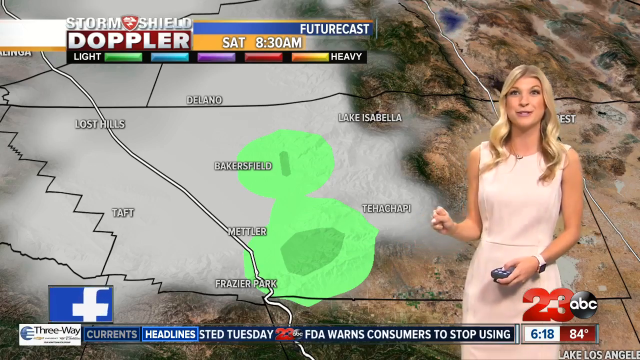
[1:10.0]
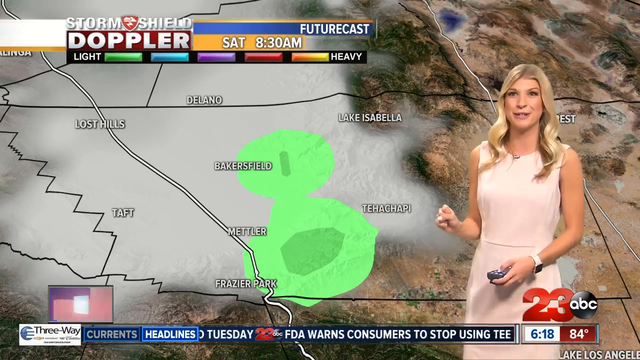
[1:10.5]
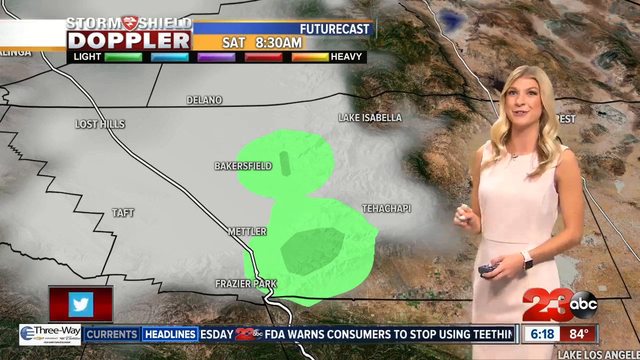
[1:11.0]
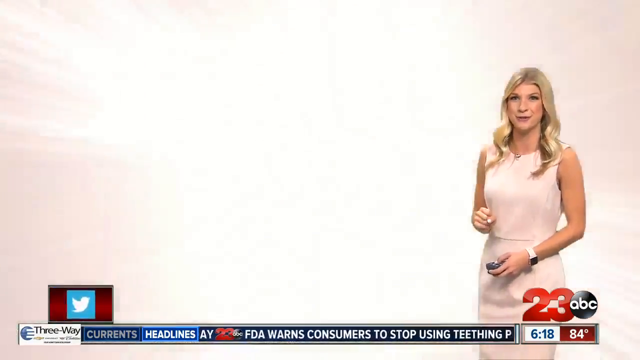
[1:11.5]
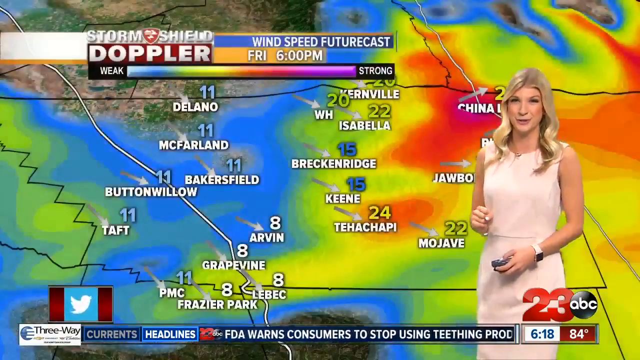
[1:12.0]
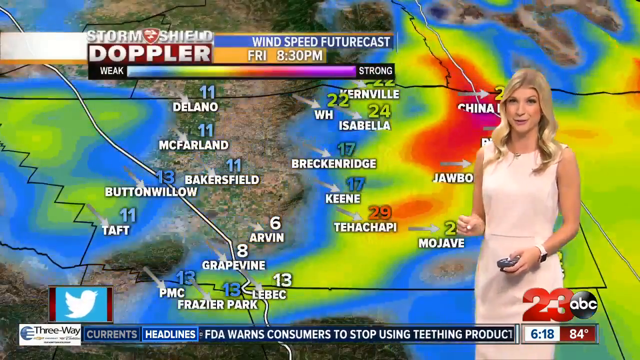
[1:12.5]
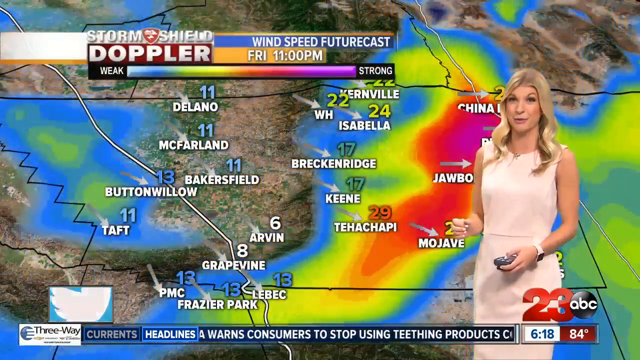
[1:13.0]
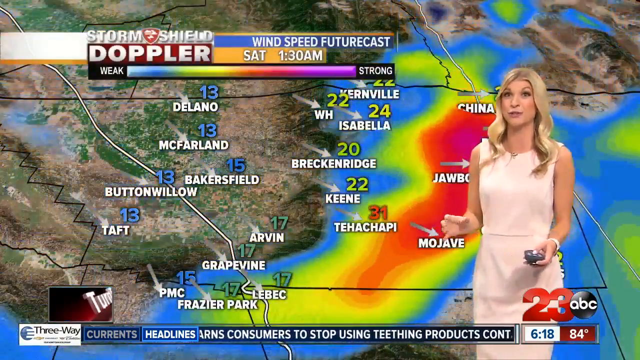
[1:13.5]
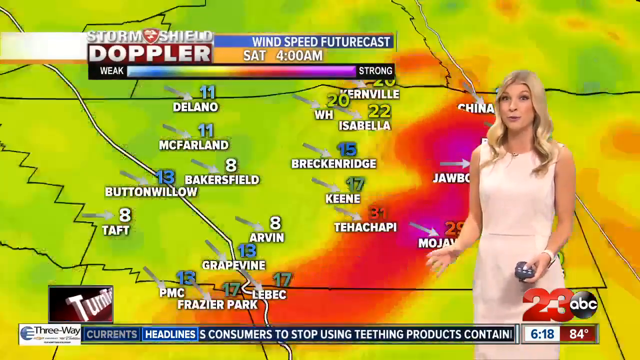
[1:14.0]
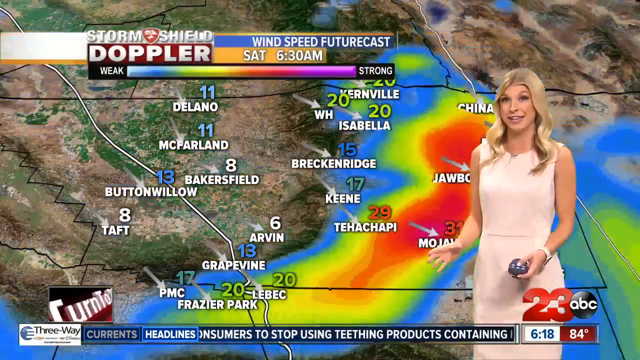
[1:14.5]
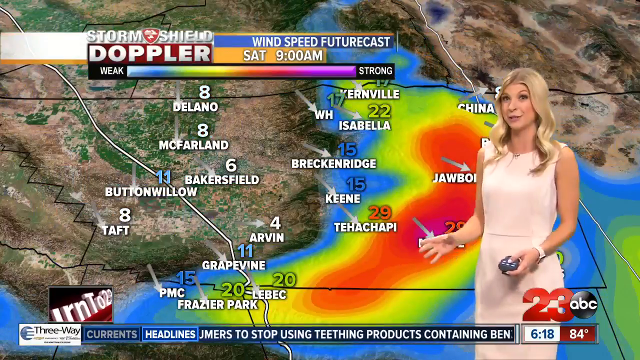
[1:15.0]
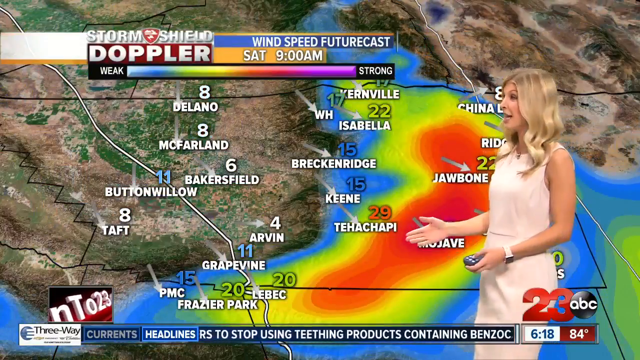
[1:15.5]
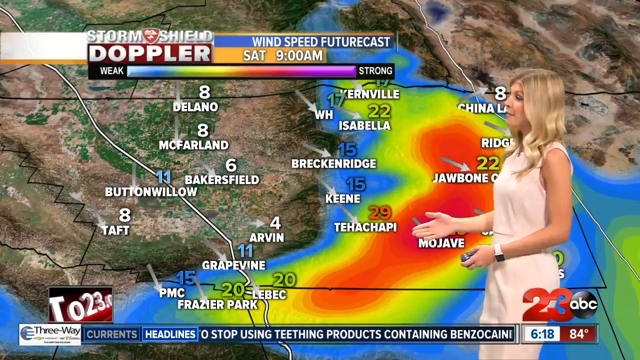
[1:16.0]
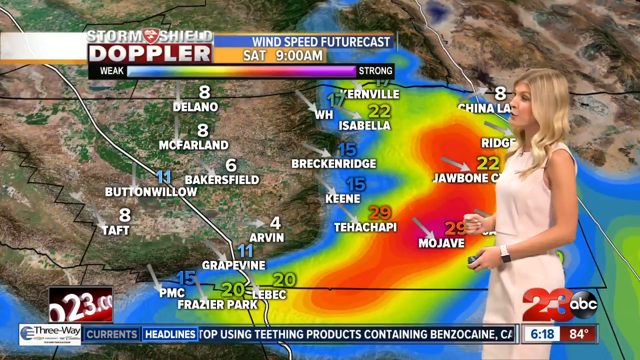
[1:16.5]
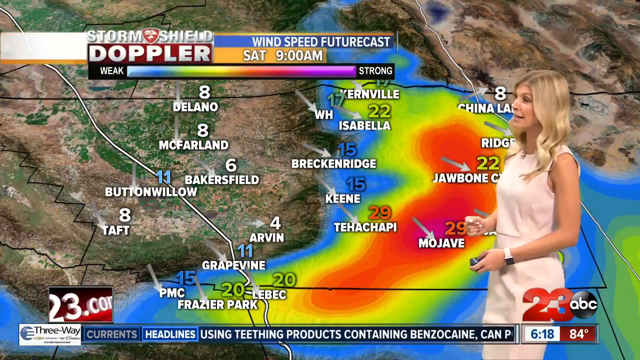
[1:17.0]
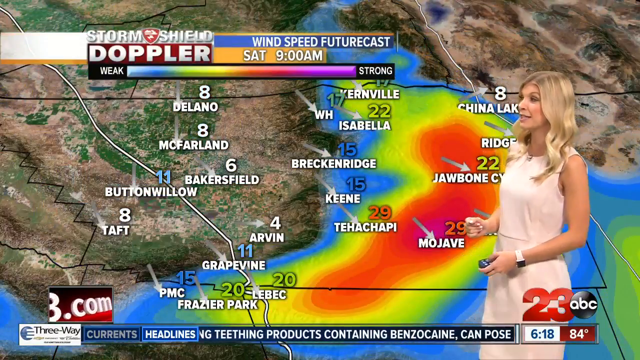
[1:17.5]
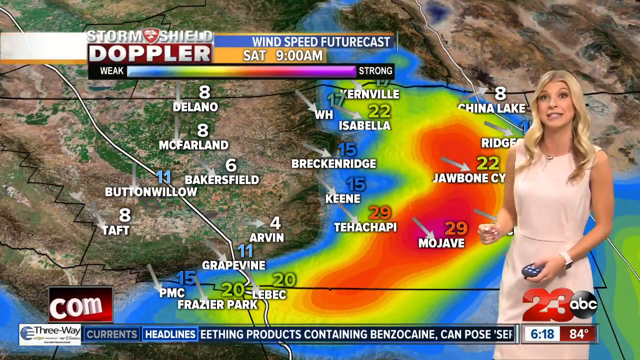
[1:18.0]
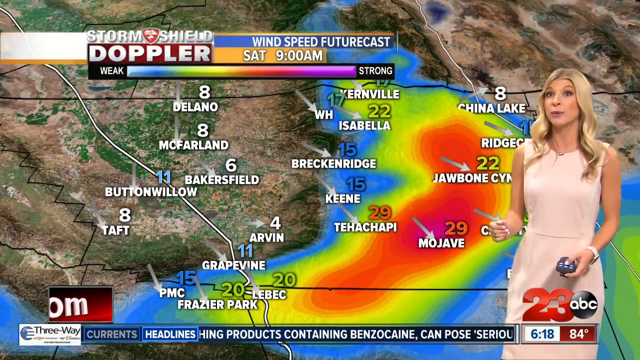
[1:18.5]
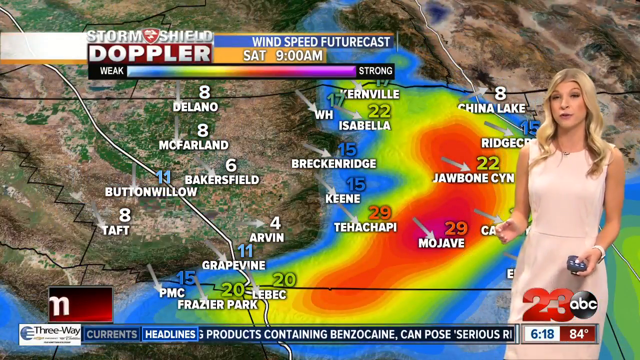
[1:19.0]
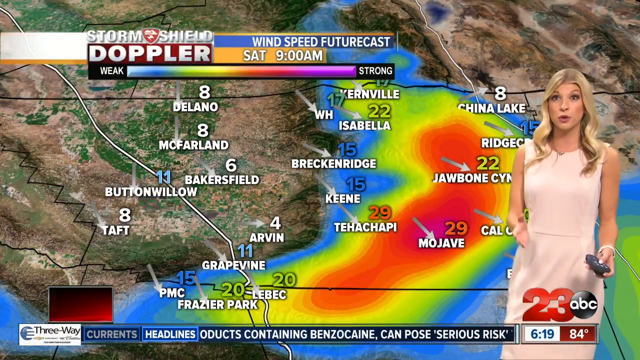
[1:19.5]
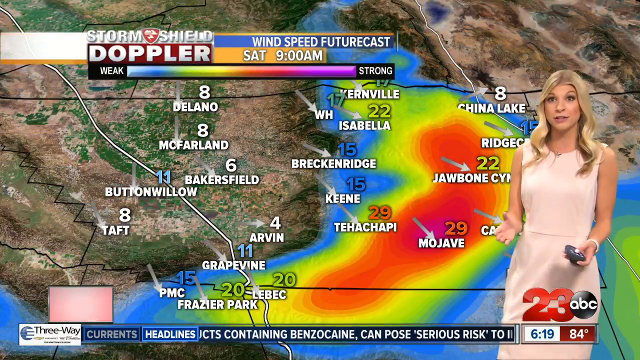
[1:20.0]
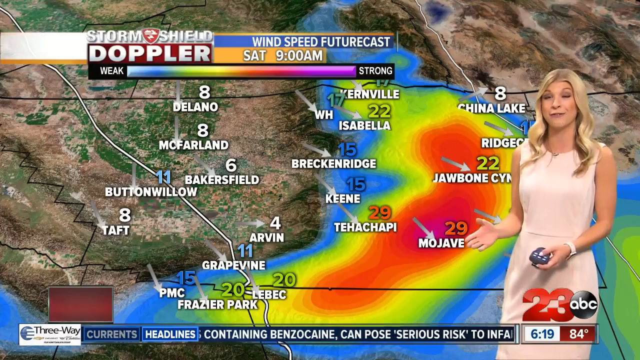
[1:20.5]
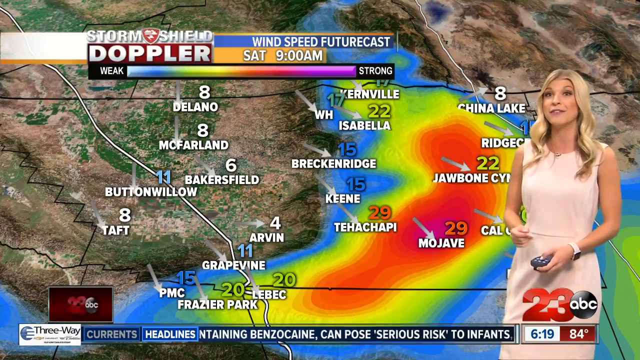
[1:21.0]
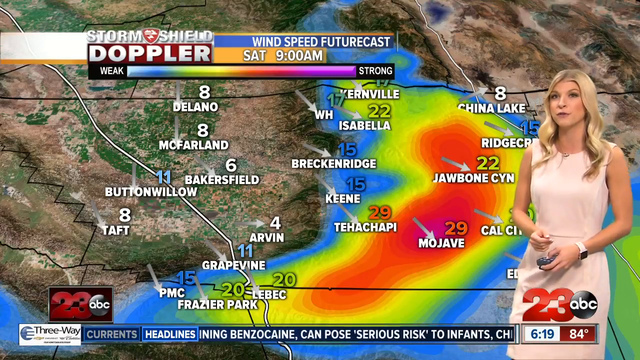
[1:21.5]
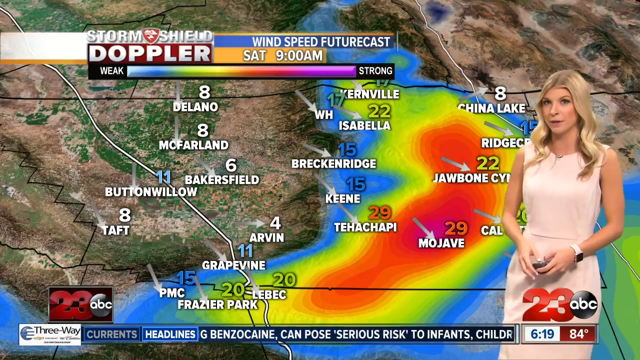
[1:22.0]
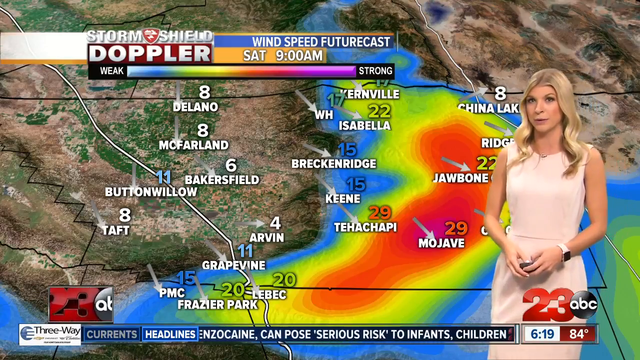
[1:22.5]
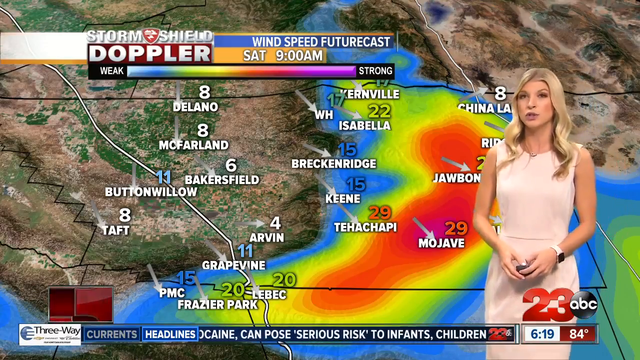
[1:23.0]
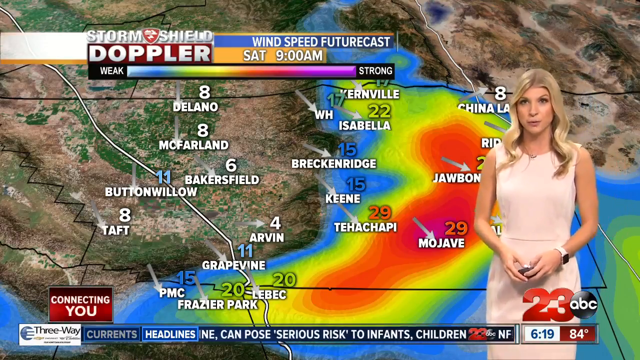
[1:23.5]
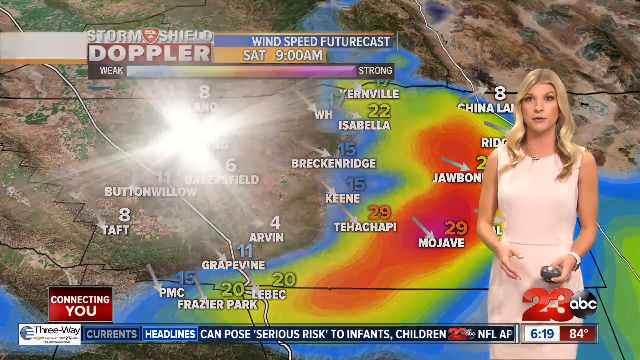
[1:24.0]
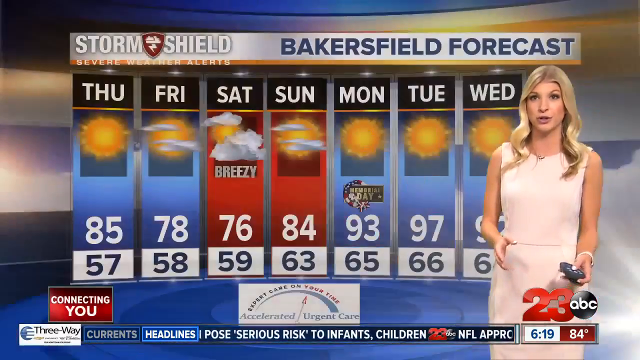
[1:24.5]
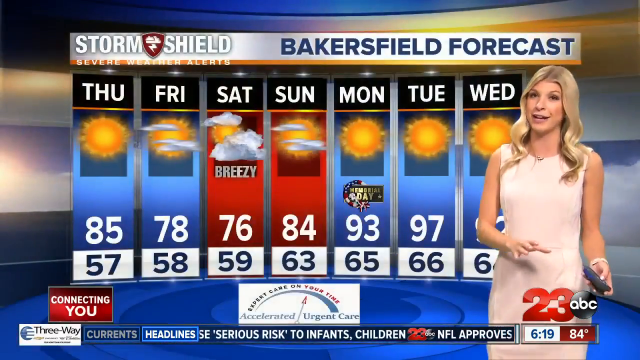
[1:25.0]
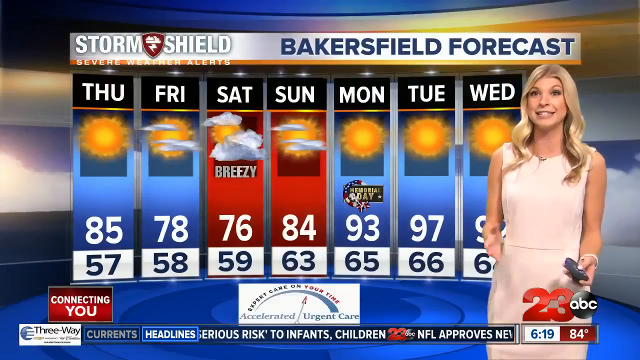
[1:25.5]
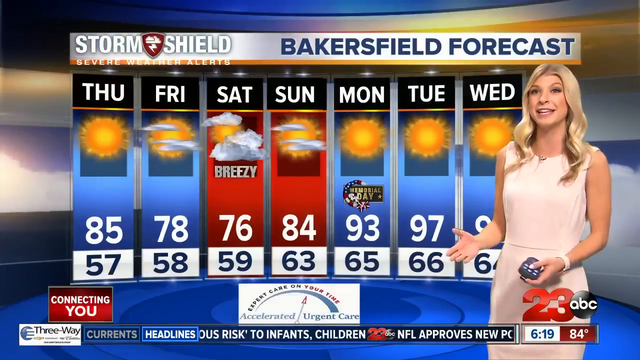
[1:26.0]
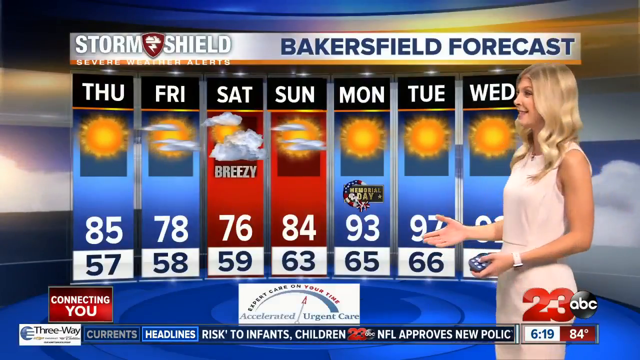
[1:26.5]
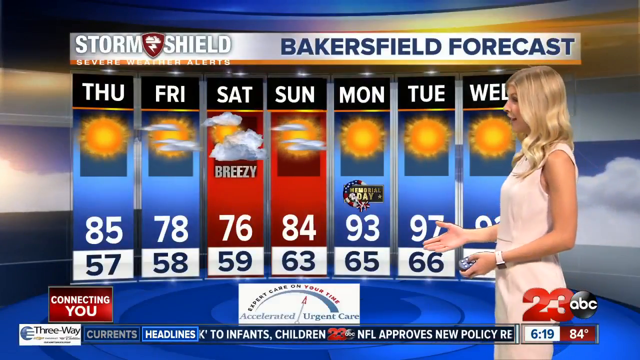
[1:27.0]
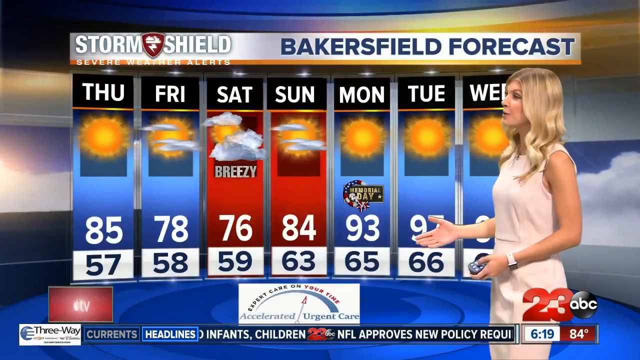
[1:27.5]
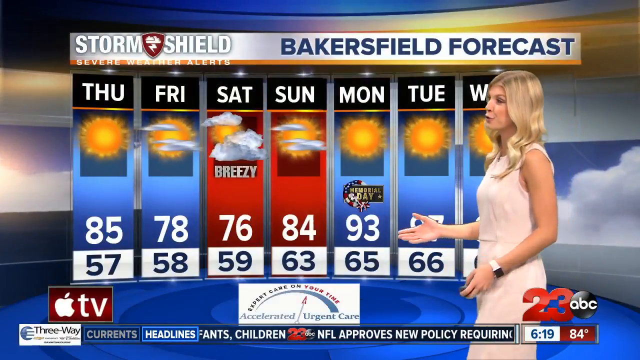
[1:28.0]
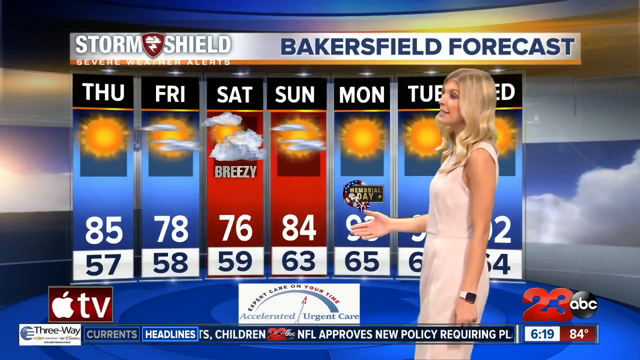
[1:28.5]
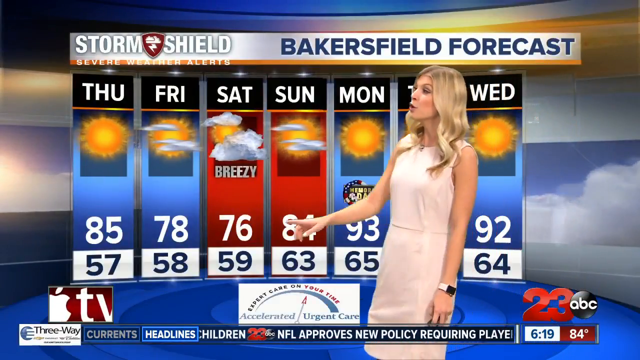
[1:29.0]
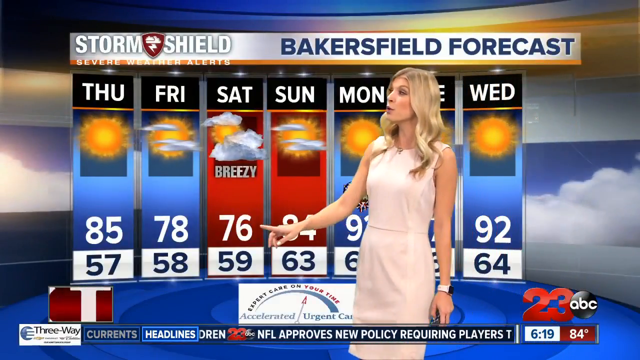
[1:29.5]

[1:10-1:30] The weather reporter, the blonde woman with white skin, shows the region overcast with clouds and a storm near some counties in California, apparently Bakersfield, Mantler, Fraser Park and Terracapi. There is a flash on the screen, and then another Doppler view appears, a wind speed futurecast with a timeline moving from Friday night to Saturday morning. The winds seem to get stronger in regions like Mojave, Tehacapi and two others covered by the reporter's body, while in the other regions the wind speed seems weak and stable over that period. After another flash on the screen, the Bakersfield forecast appears as a day-by-day graph from Thursday to Wednesday. Monday and Tuesday look like the hottest days and Friday the chilliest. Saturday and Sunday are in red on the graph, and Saturday is labeled "breezy"; the two red days possibly have more wind. The reporter is showing something in that regard.